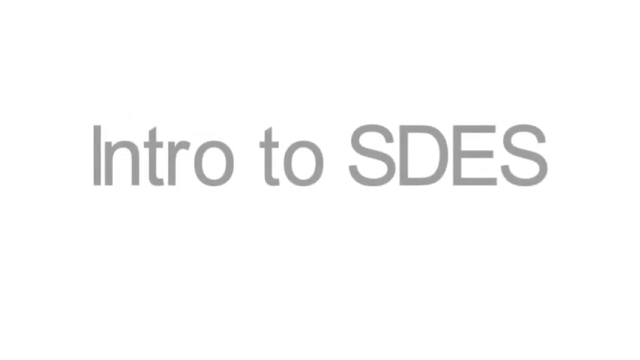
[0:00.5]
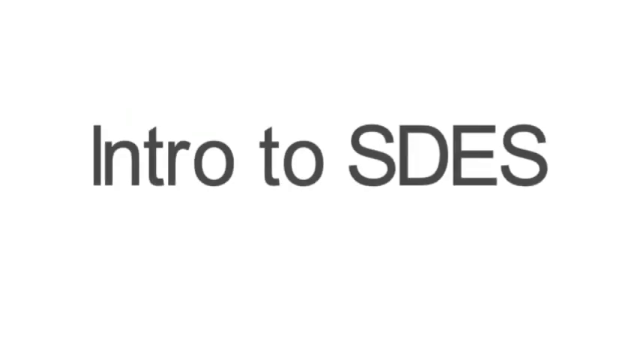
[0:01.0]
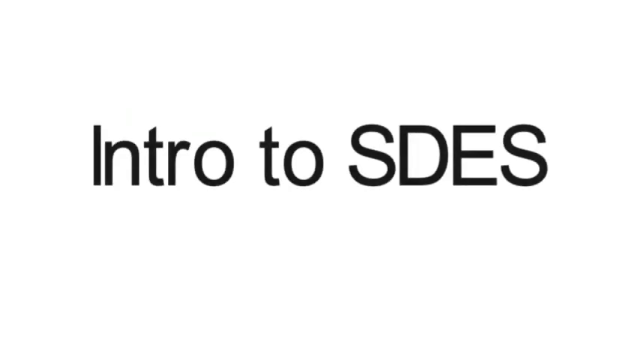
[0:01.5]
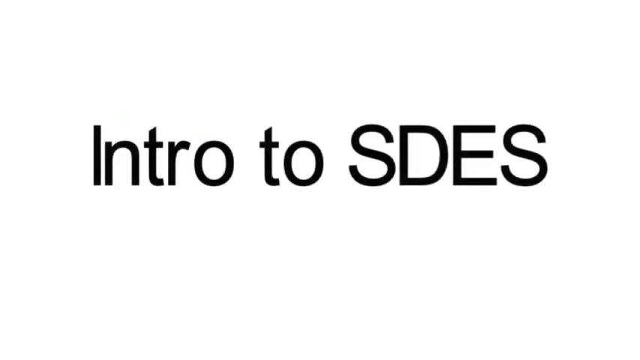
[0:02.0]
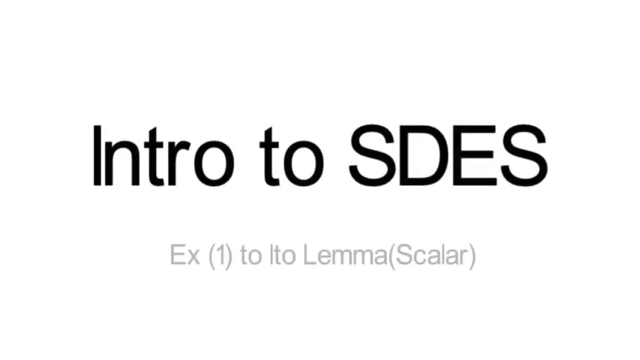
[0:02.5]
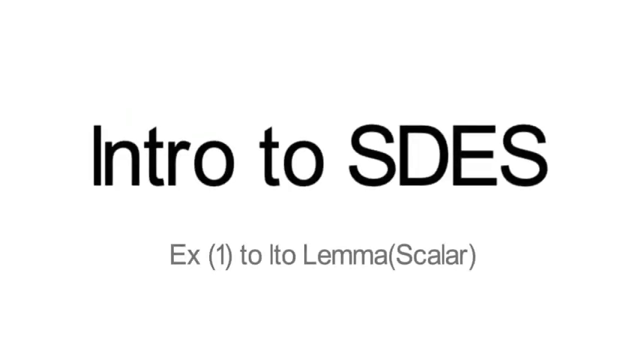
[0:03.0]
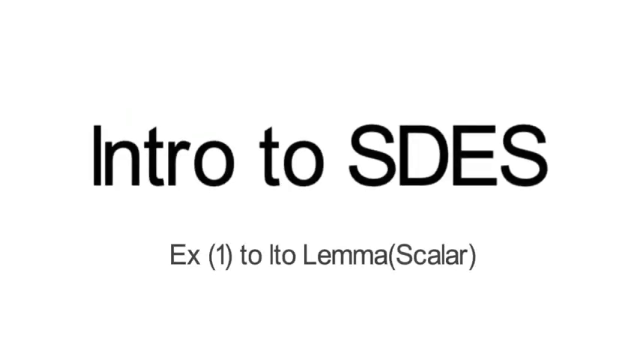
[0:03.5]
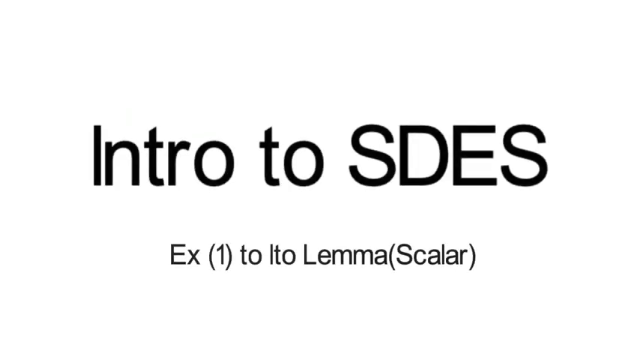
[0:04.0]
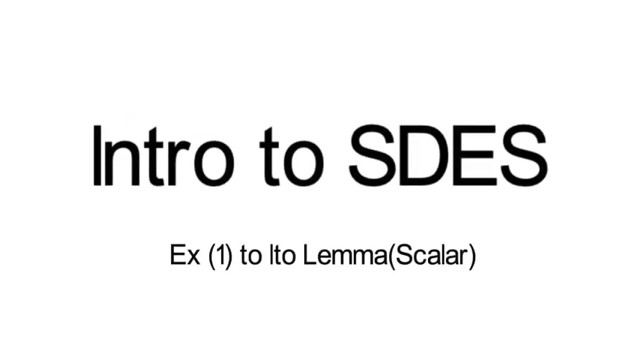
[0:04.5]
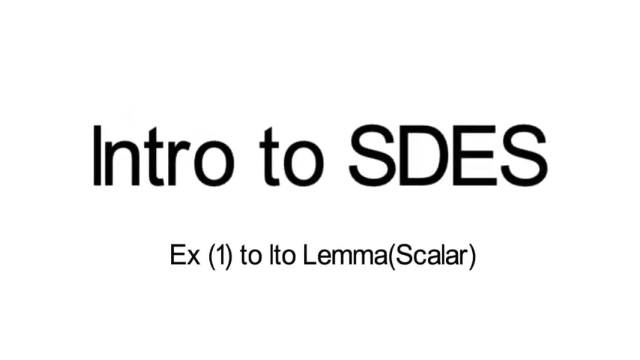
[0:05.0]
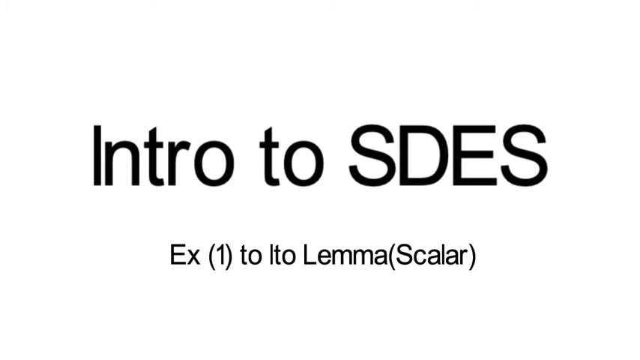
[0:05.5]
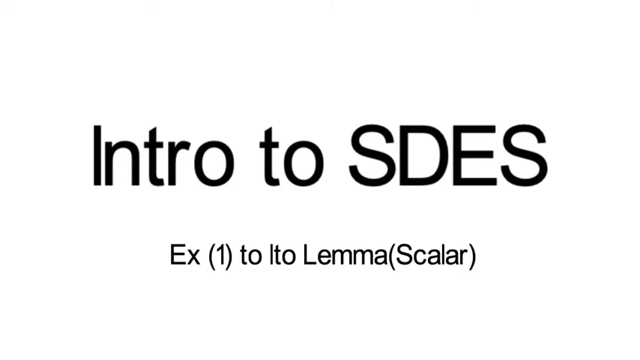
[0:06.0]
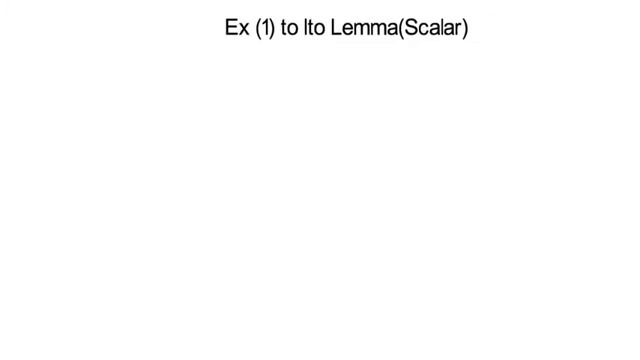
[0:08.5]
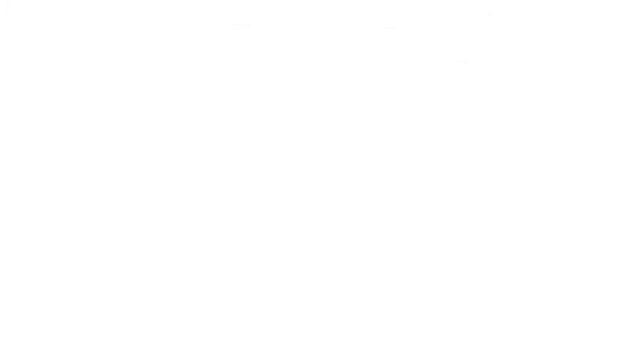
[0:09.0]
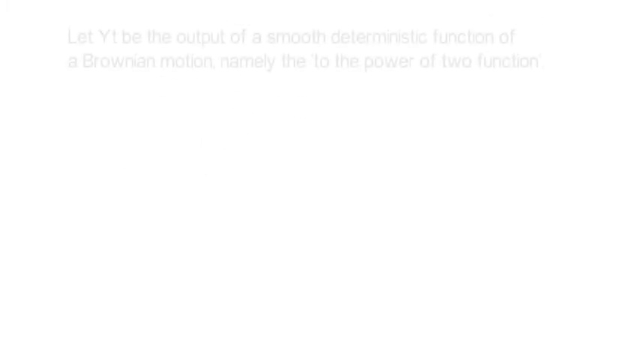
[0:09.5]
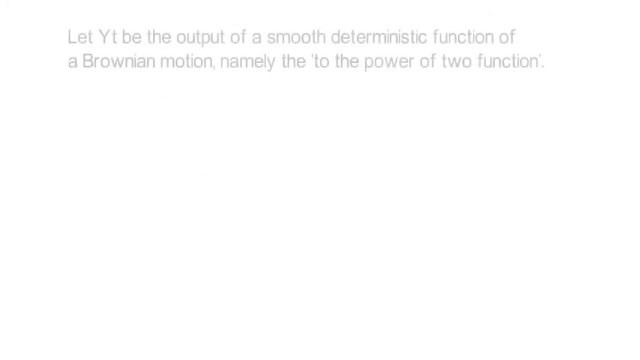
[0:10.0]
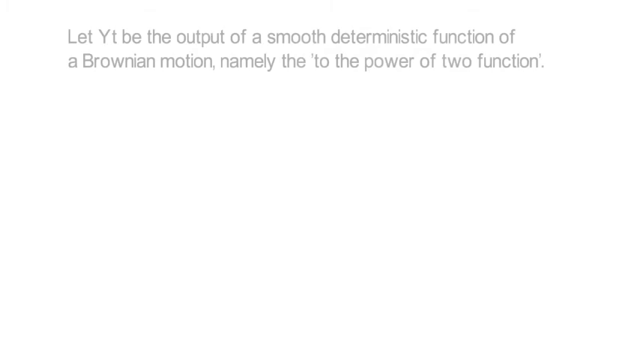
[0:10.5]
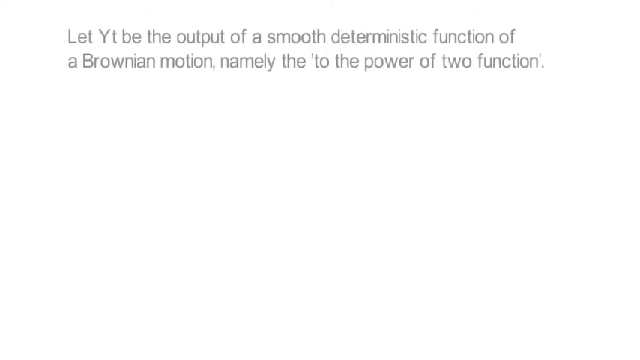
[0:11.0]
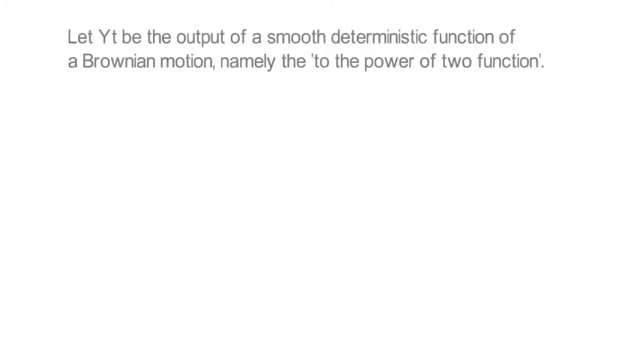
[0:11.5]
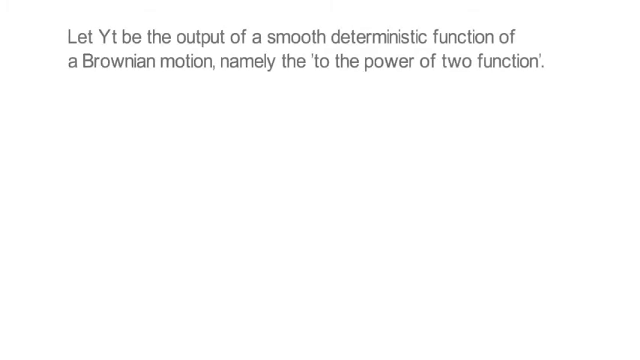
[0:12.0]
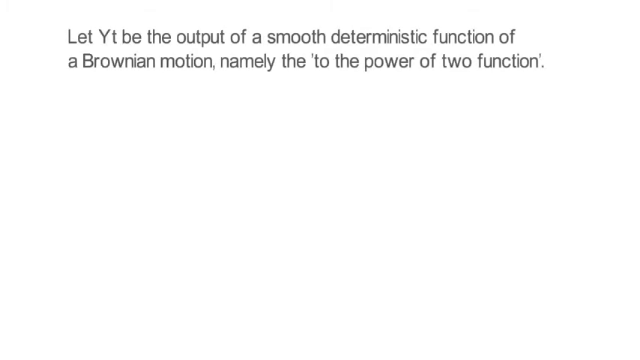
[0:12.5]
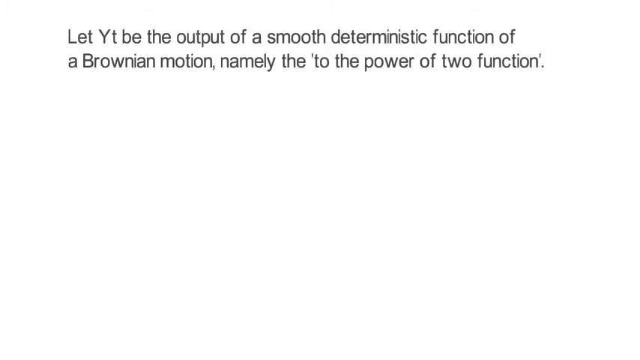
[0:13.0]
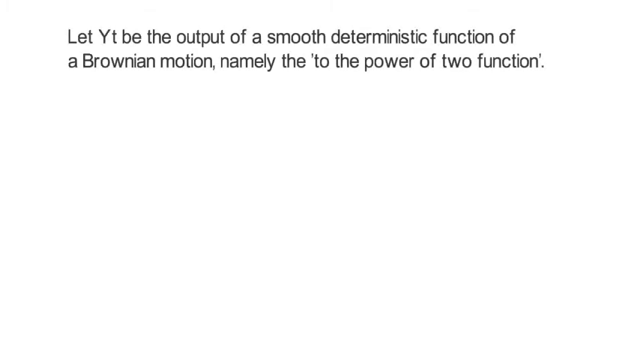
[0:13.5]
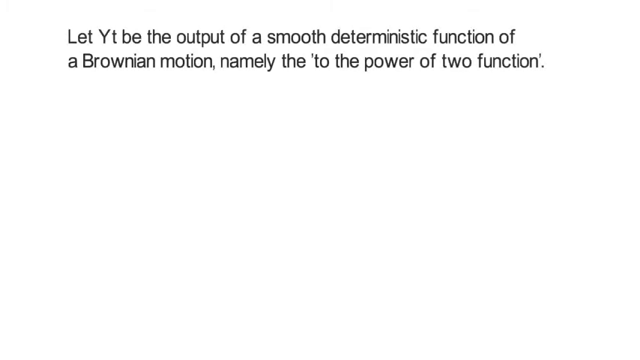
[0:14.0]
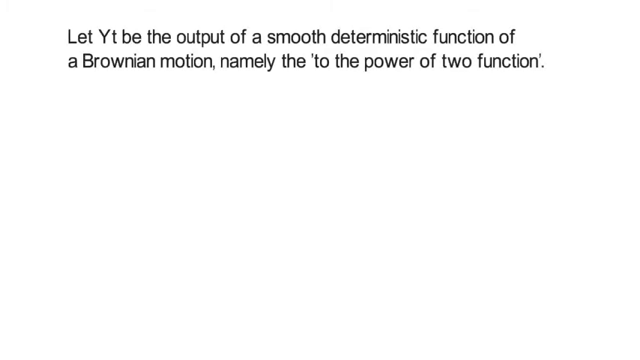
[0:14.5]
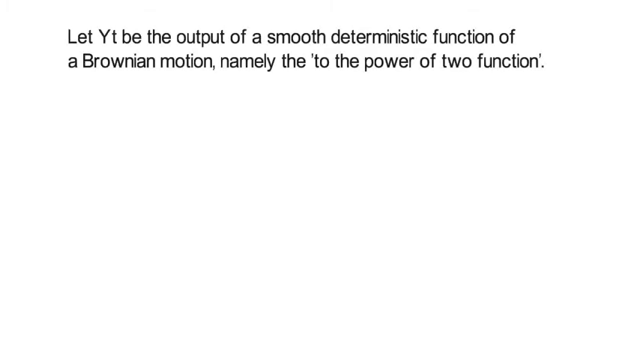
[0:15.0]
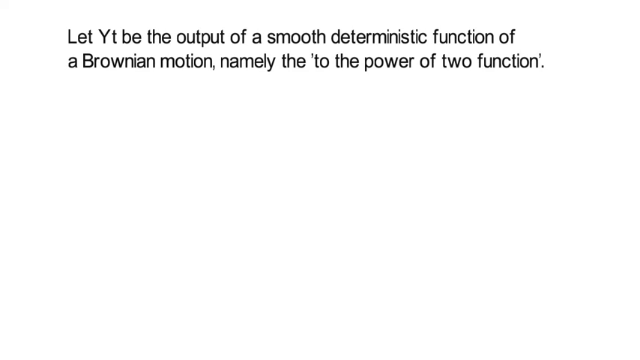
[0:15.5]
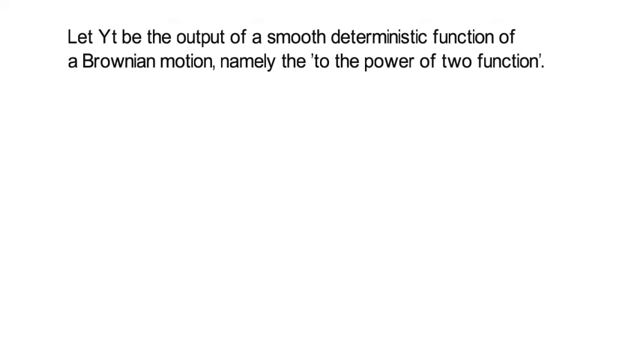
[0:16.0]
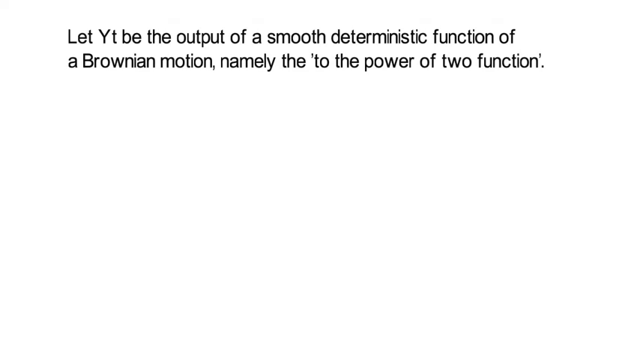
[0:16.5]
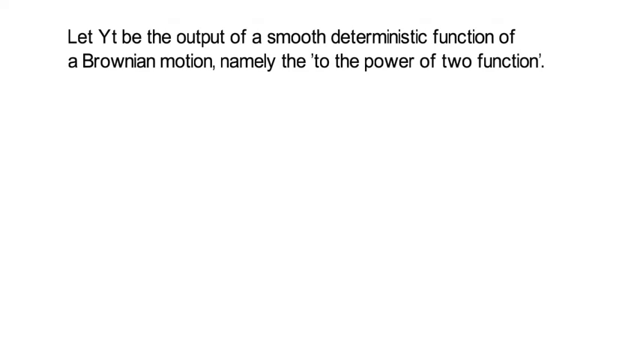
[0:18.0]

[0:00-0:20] The video opens on a title slide reading "Intro to SDES X1 to LTO Lemma Scalar." The text fades out in the upper section of the screen, and the next slide reads "let YT be the output of a smooth deterministic function of a Brownian motion, namely the to the power of two function." The background is white, and toward the bottom there is a greyed-out transition into a pitch-black section. The presentation is very simple and looks like a very basic PowerPoint animation, covering a very technical, theoretical mathematical or physics topic.